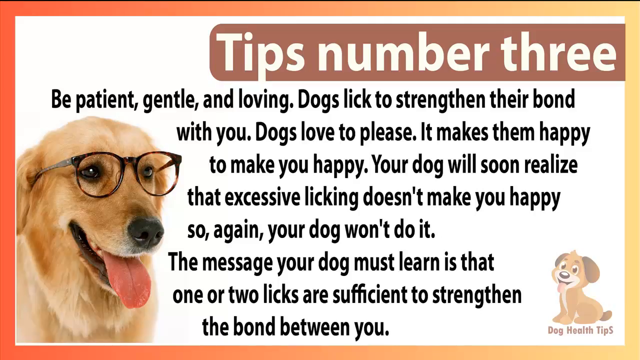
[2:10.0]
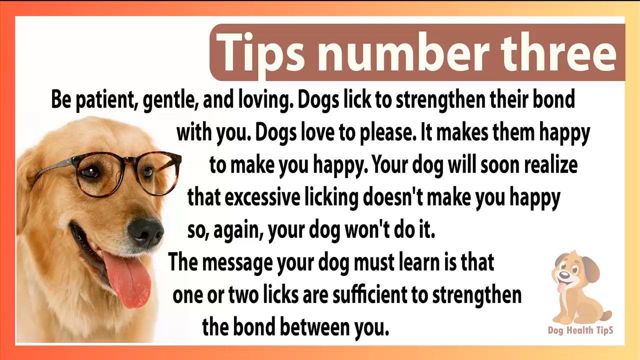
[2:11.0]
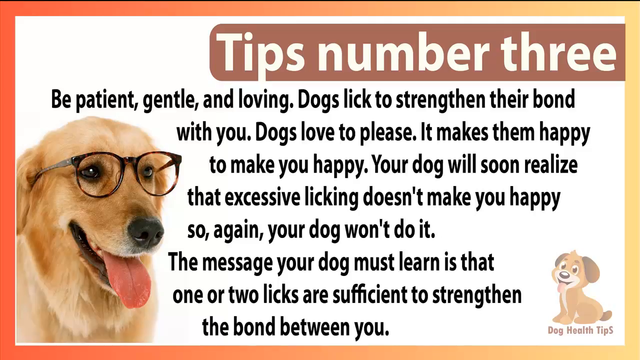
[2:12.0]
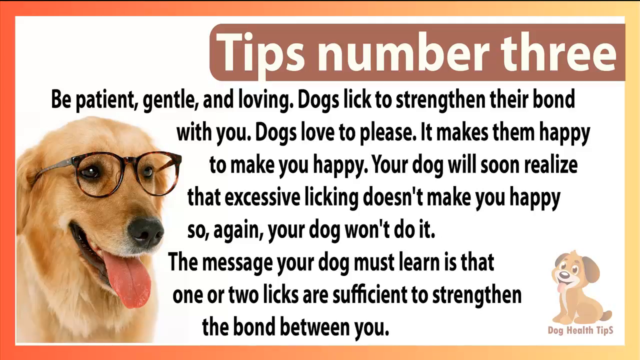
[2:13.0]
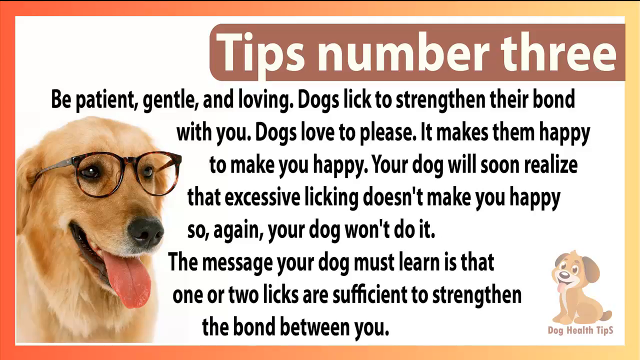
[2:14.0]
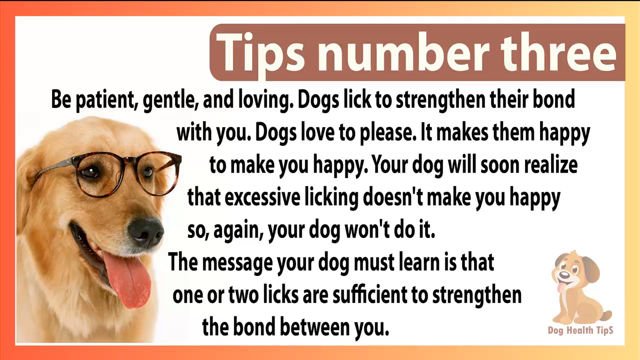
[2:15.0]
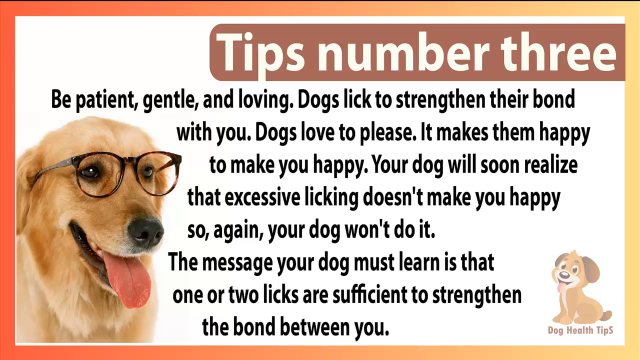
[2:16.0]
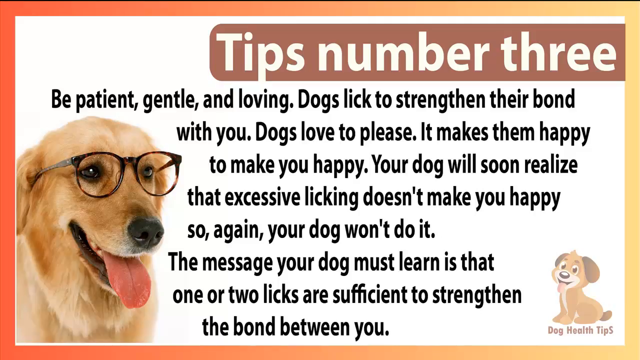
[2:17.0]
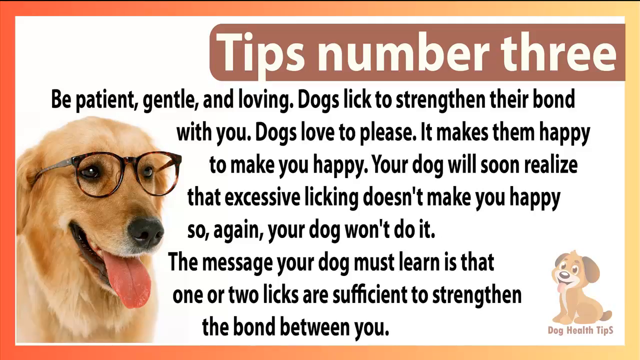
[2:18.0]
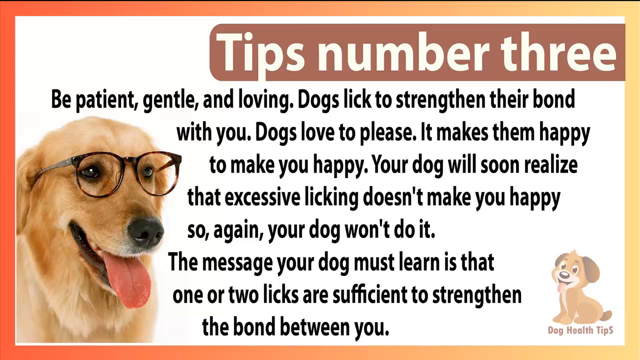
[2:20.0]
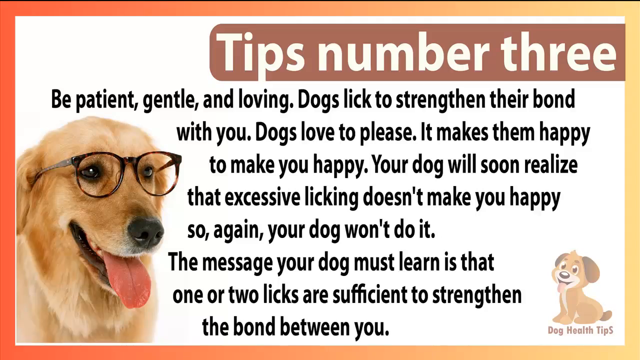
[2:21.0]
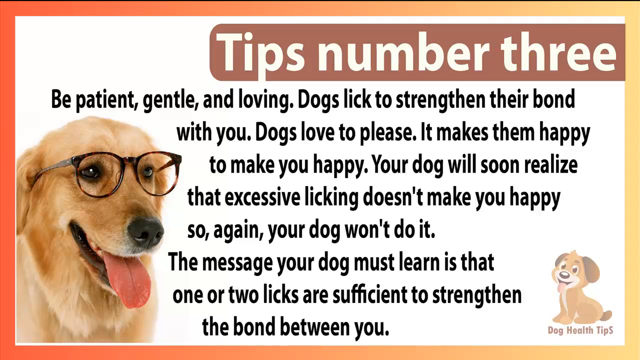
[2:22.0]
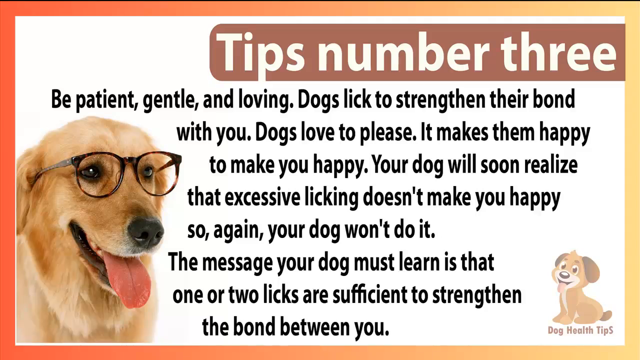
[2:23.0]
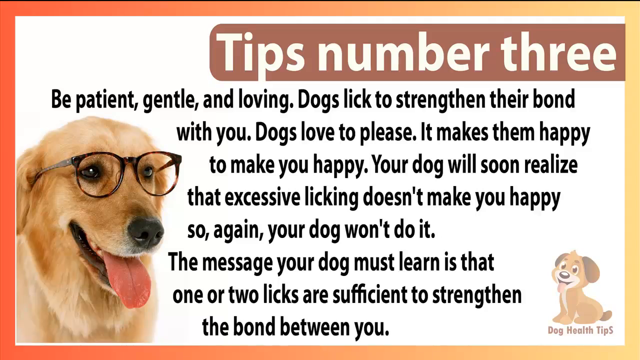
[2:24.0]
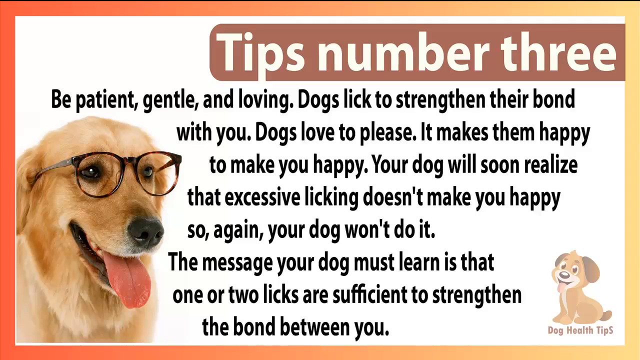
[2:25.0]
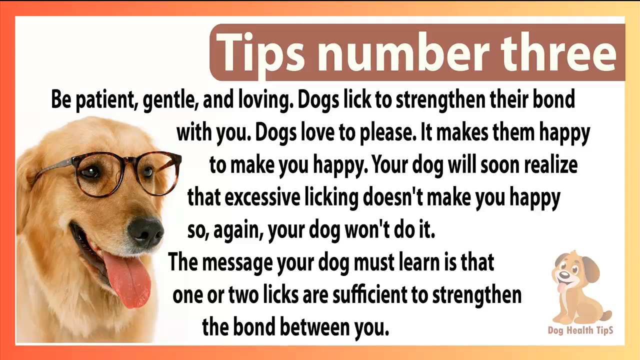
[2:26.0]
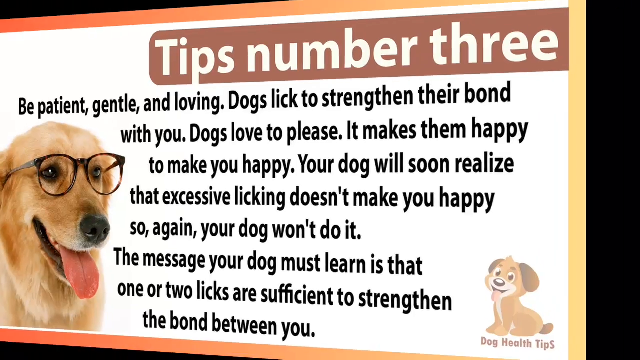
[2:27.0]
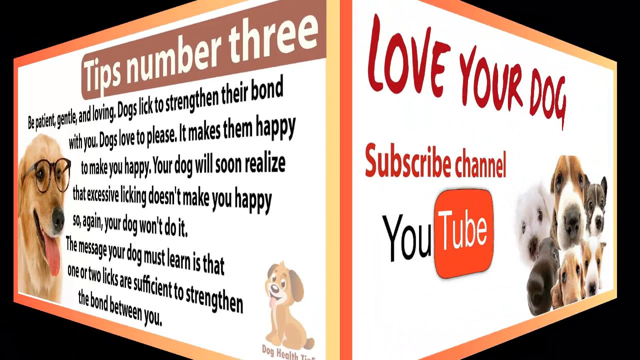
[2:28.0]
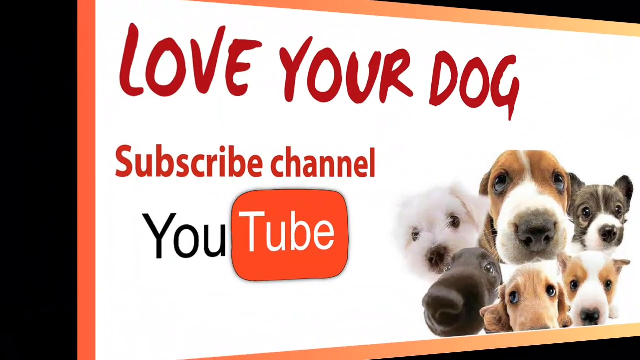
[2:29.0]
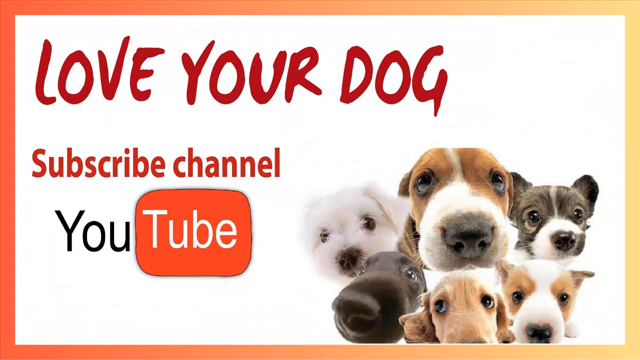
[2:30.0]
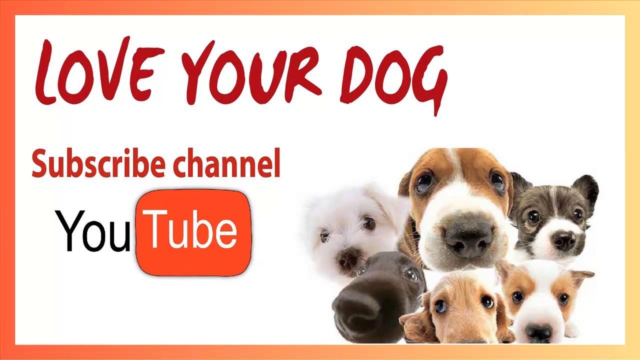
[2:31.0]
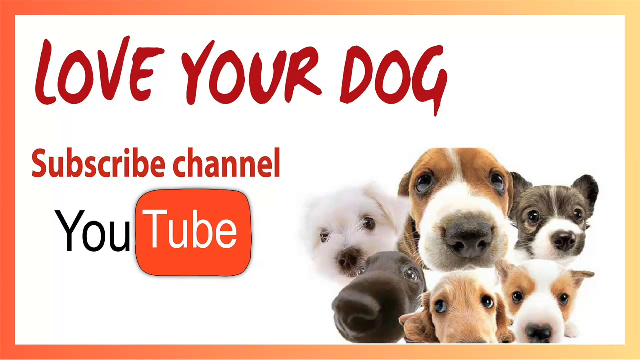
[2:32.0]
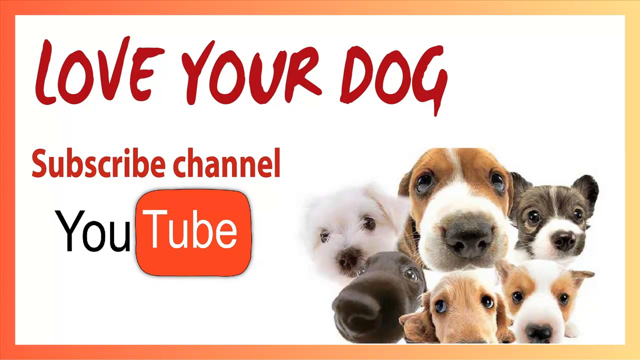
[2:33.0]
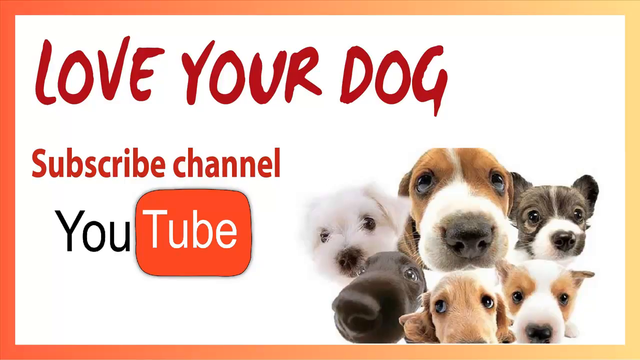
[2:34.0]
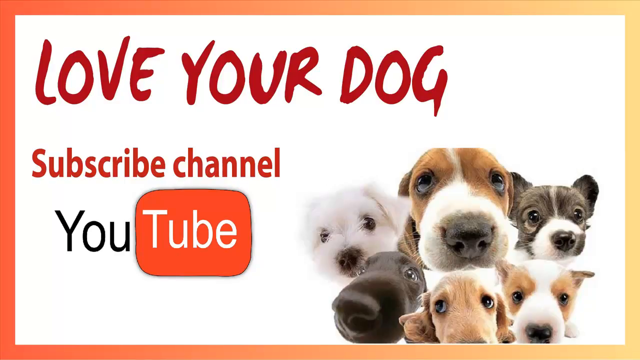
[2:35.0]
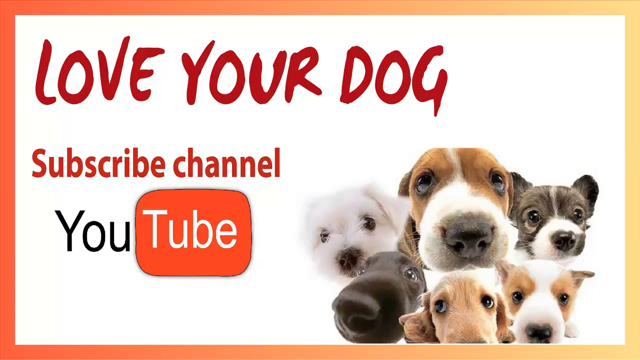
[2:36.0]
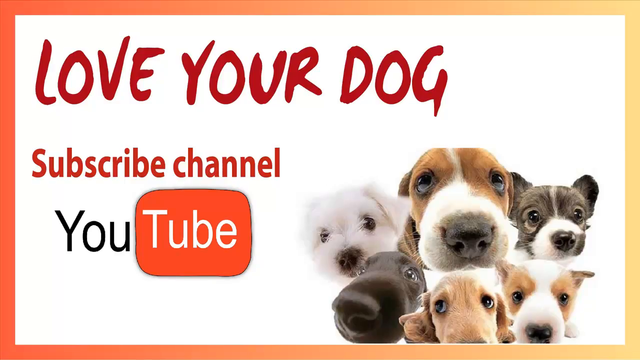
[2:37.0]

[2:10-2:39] The white background has black text reading: "be patient gentle and loving. Dogs lick to strengthen their bond with you. Dogs love to please, it makes them happy to make you happy. Your dog will soon realize that excessive licking doesn't make you happy so again your dog won't do it. The message your dog must learn is that one or two licks are sufficient to strengthen the bond between you." In the bottom left-hand corner is a picture of a golden retriever with its tongue out, looking happy and relaxed and wearing tortoiseshell glasses. The cartoon dog logo is in the bottom right of the screen, and at the top the title reads "tips number three" in white writing. The screen is bordered by three different colours.